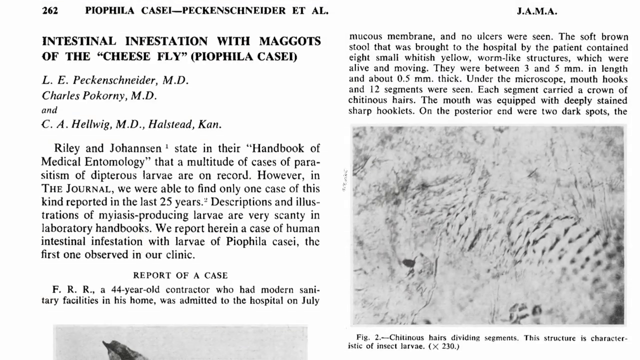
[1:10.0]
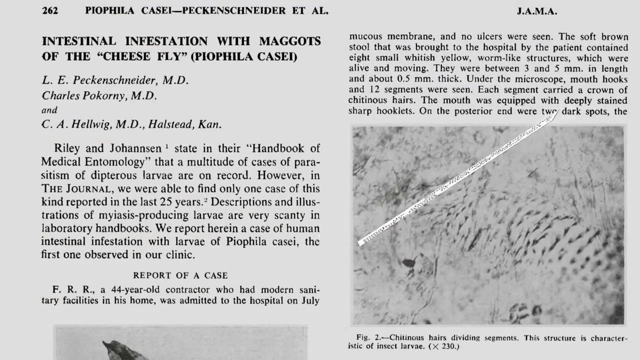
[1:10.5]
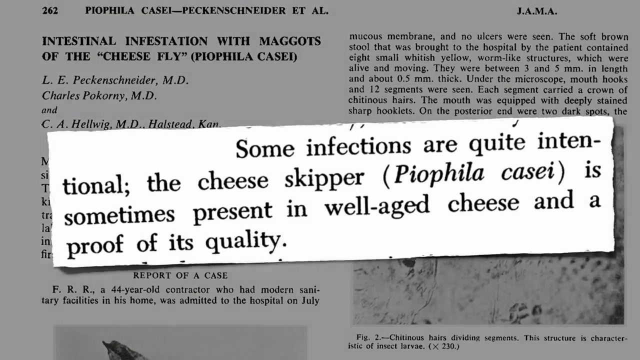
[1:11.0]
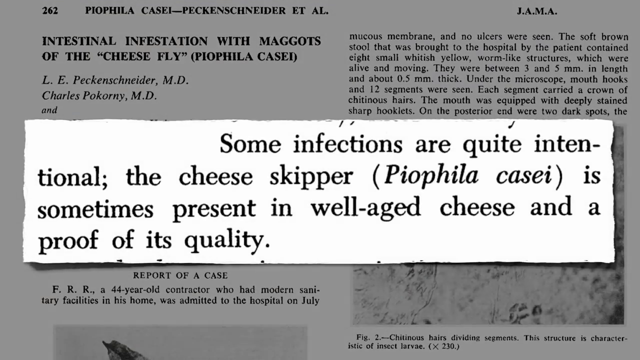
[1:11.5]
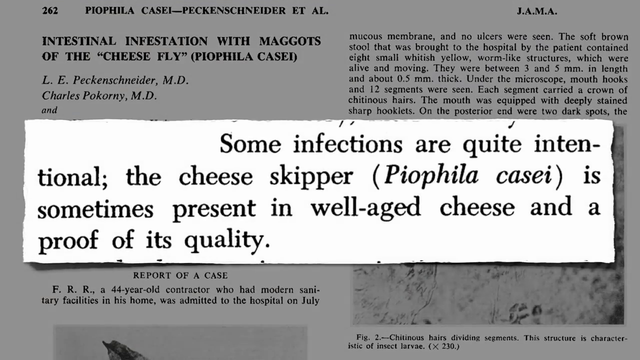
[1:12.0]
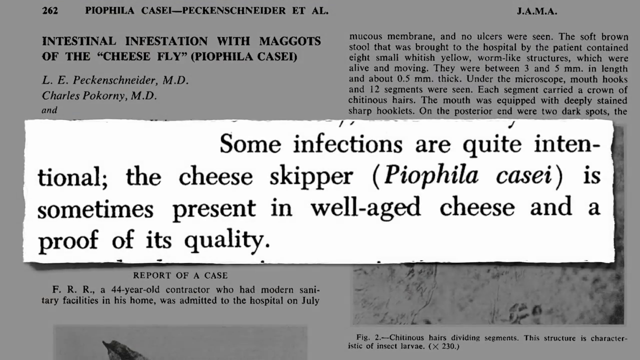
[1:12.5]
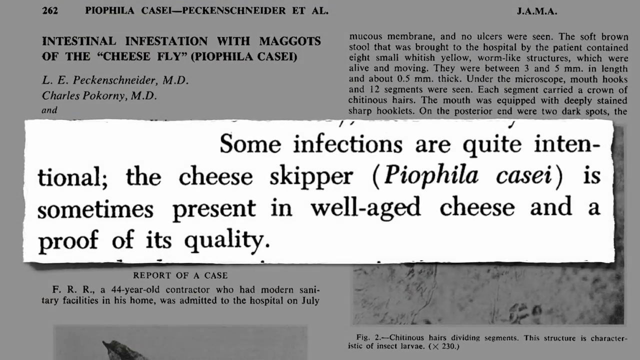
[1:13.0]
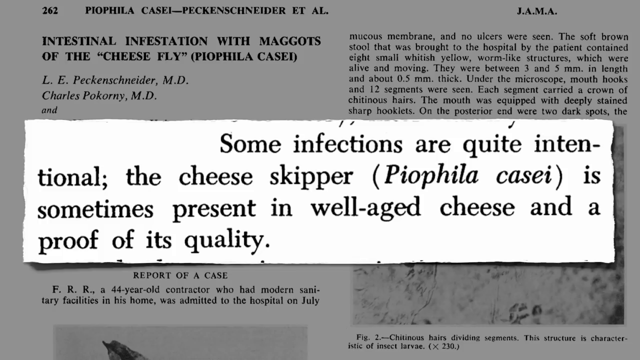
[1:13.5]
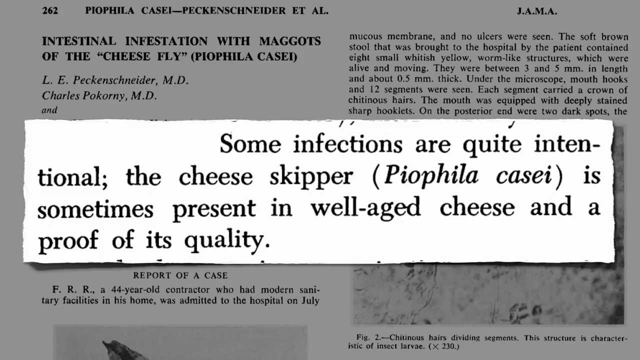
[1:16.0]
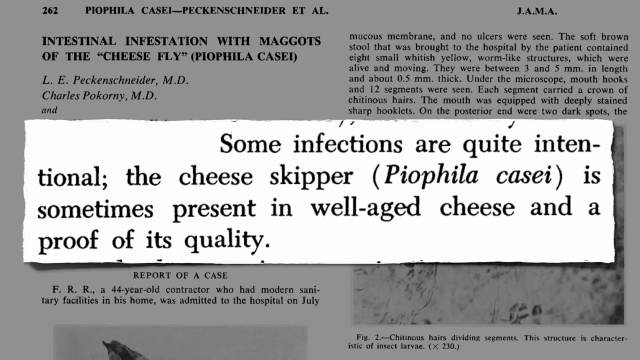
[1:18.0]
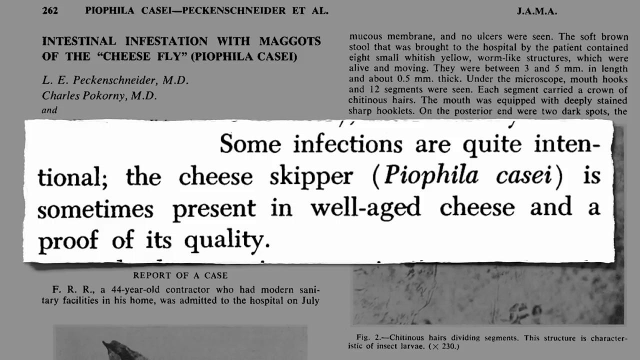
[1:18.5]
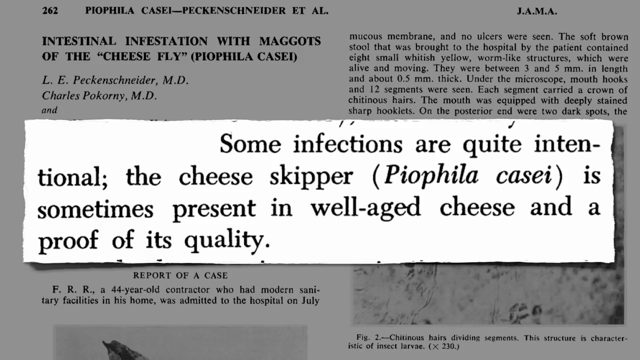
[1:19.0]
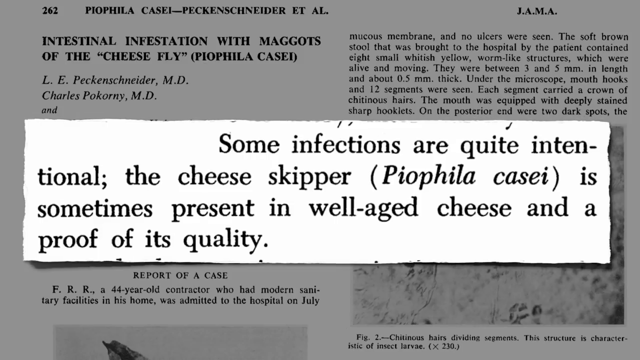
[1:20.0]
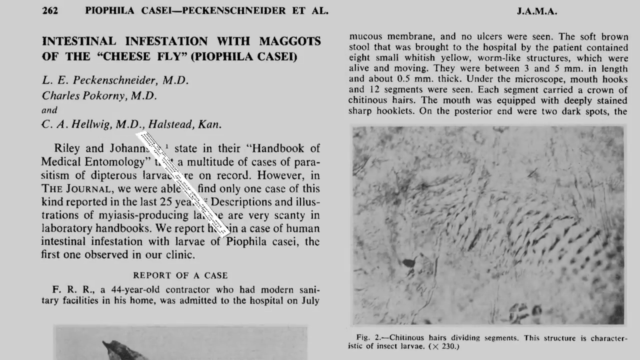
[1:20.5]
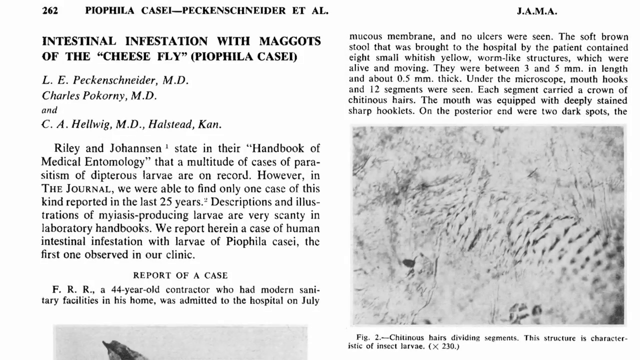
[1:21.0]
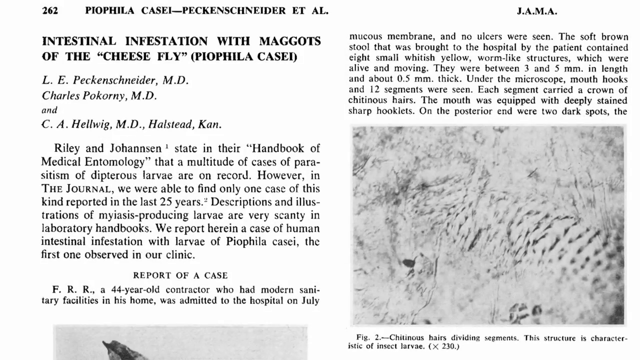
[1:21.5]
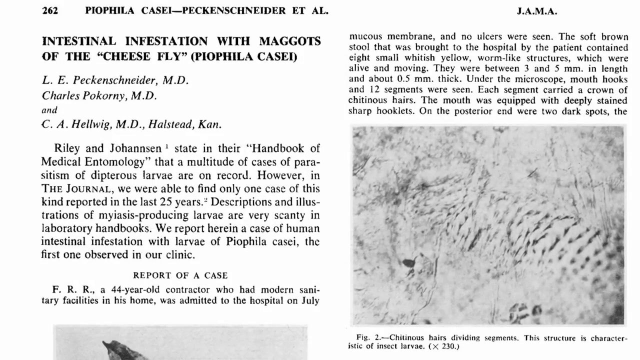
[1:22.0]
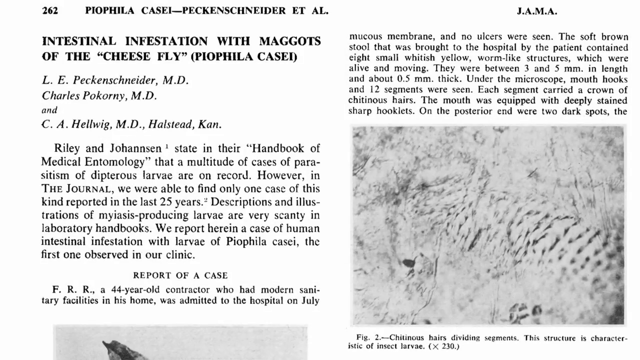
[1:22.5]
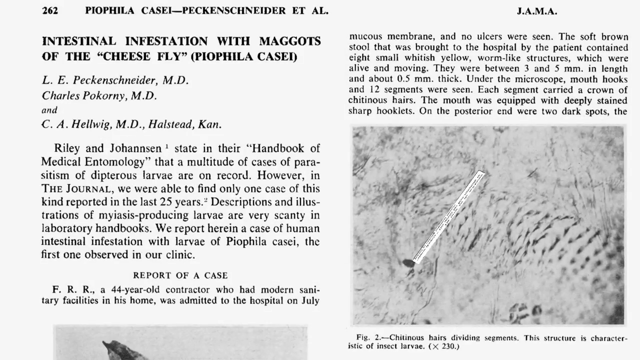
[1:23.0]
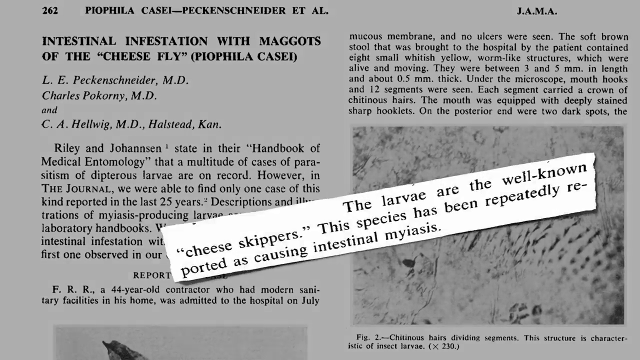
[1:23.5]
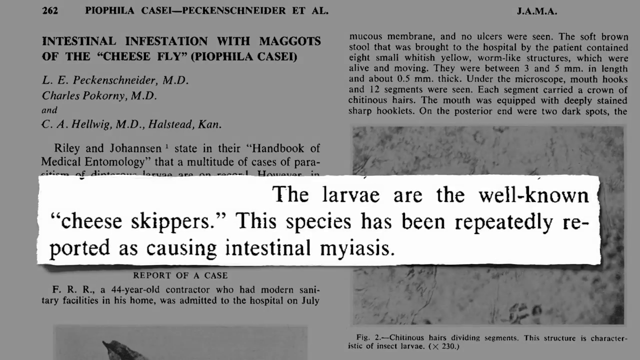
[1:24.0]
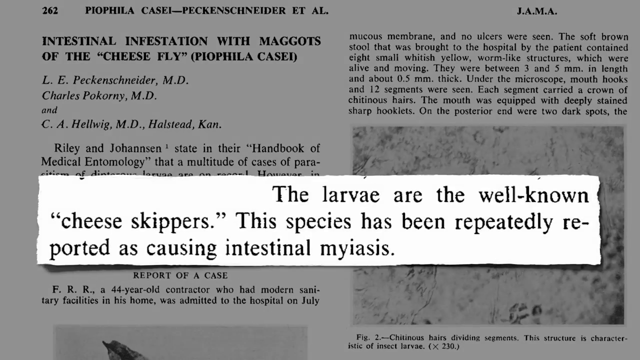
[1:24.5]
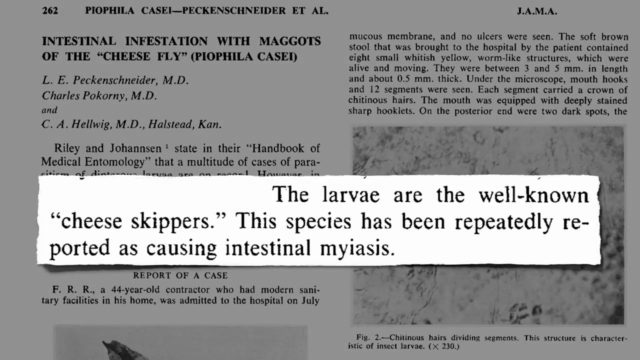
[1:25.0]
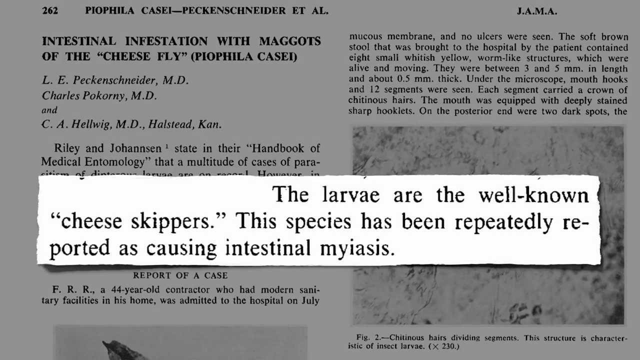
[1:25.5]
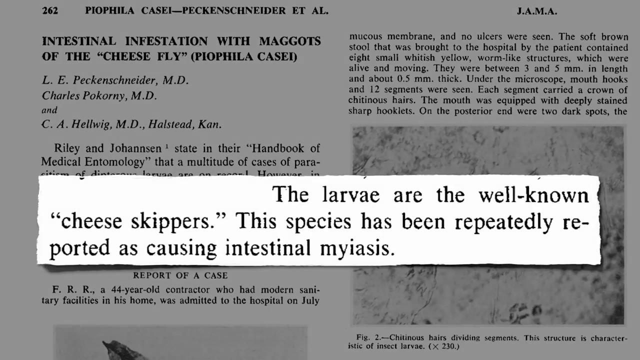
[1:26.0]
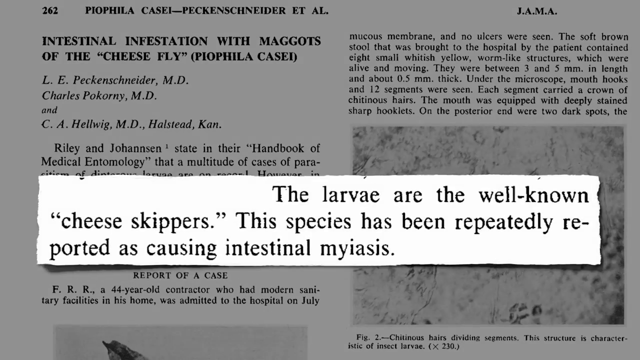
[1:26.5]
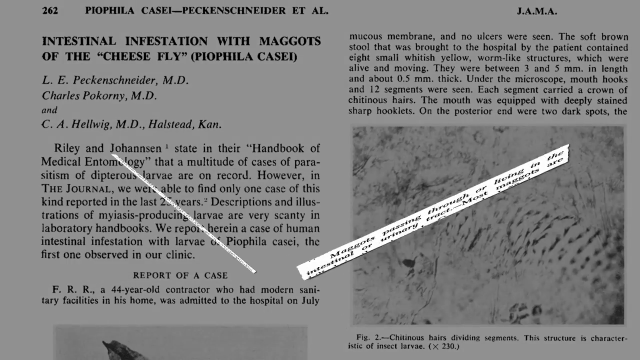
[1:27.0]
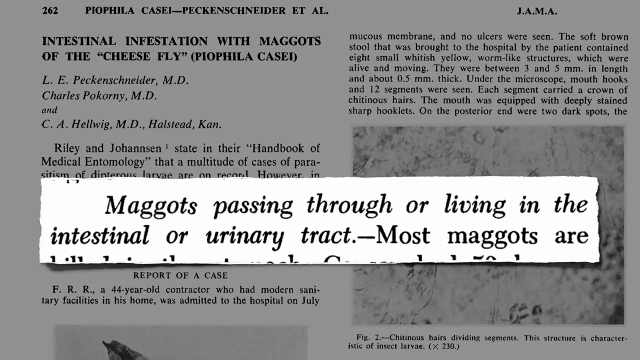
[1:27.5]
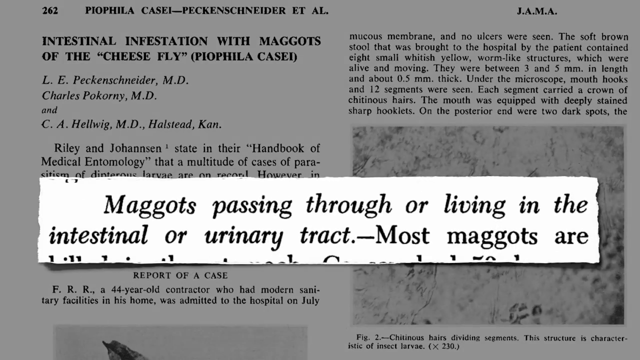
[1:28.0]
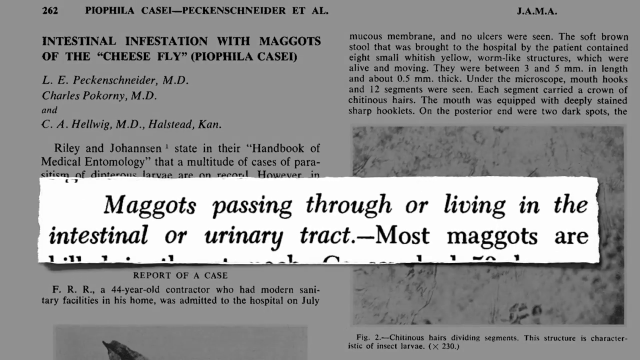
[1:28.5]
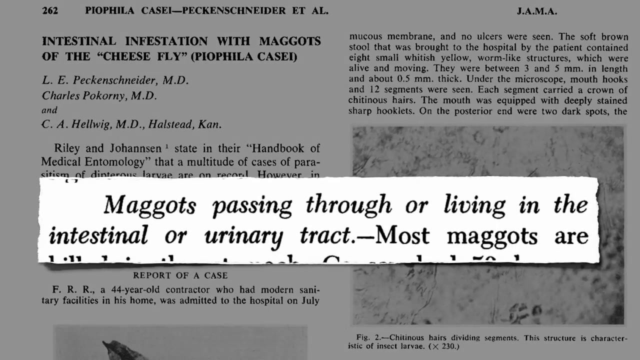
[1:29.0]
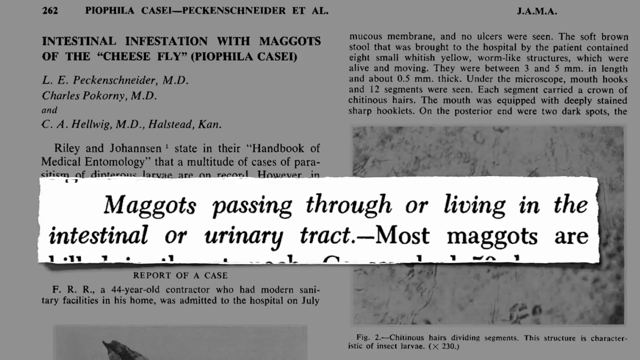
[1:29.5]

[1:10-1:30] The page is numbered 262 at the top left. A highlighted part of the article appears in bigger font in the center of the screen, reading: "some infections are quite intentional. The cheese skipper (Piophila casei) is sometimes present in well-aged cheese in a proof of its quality." The highlighted section moves back into the text and another appears: "the larvae are the well-known cheese skippers. This species has been repeatedly reported as causing intestinal myiasis." A third highlighted piece of text concerns maggots passing through the intestinal or urinary tract. An image in the article about the contractor's hospital visit seems to show segments of the sample taken from the patient under a microscope.